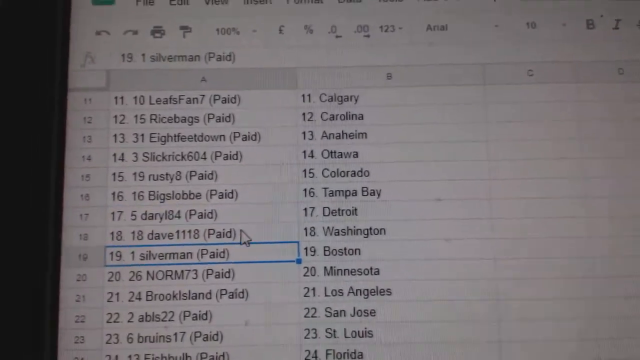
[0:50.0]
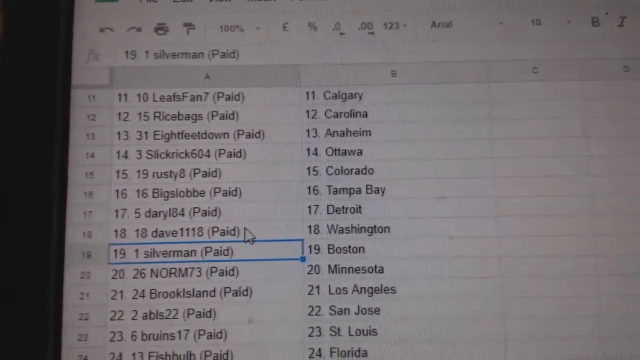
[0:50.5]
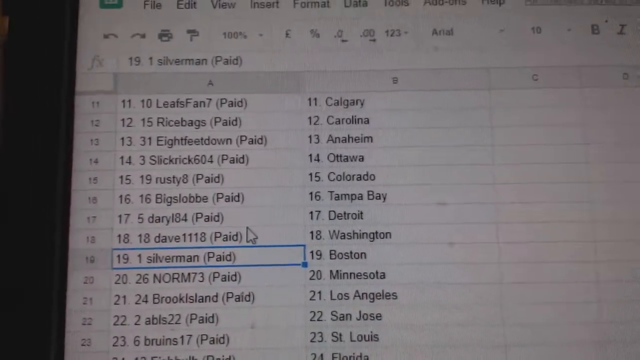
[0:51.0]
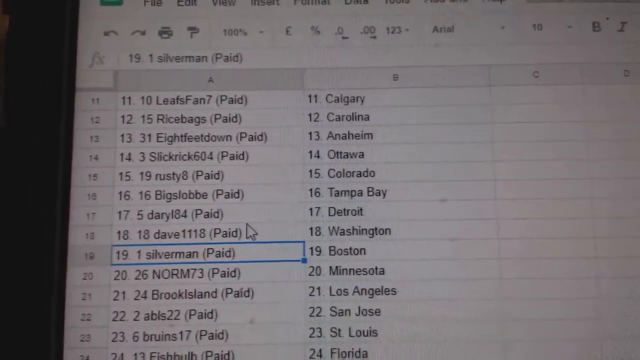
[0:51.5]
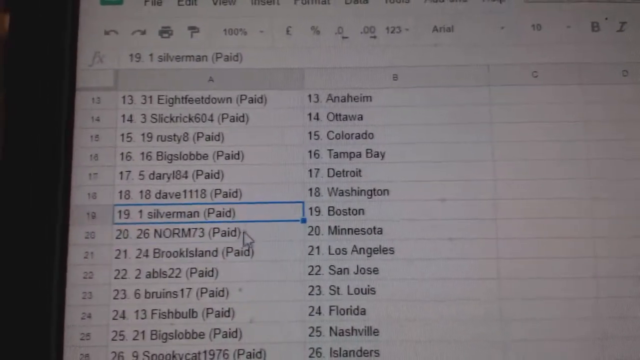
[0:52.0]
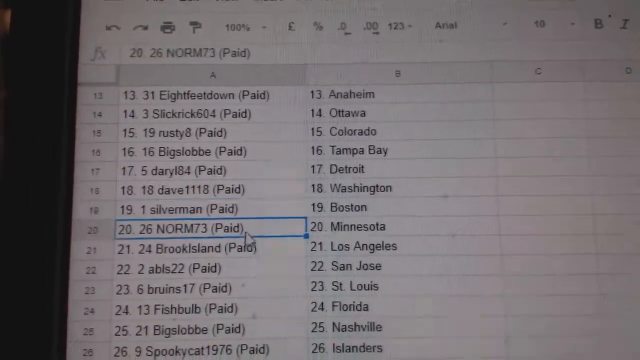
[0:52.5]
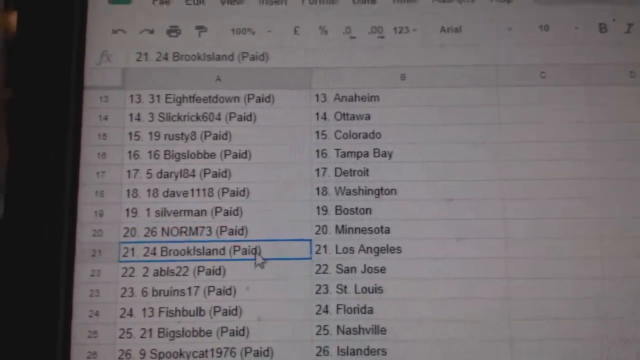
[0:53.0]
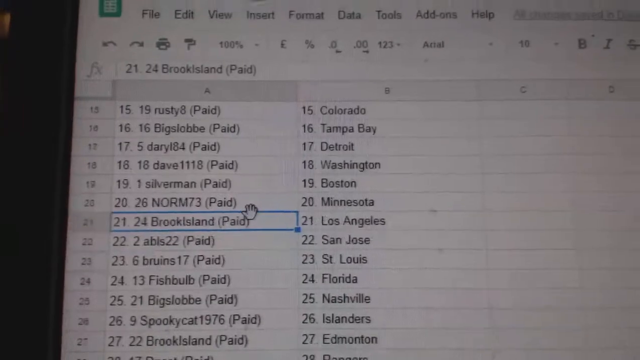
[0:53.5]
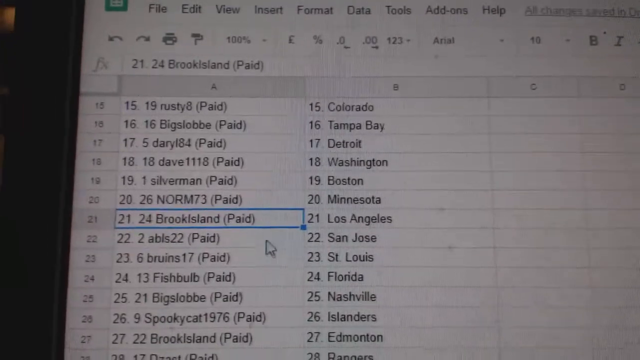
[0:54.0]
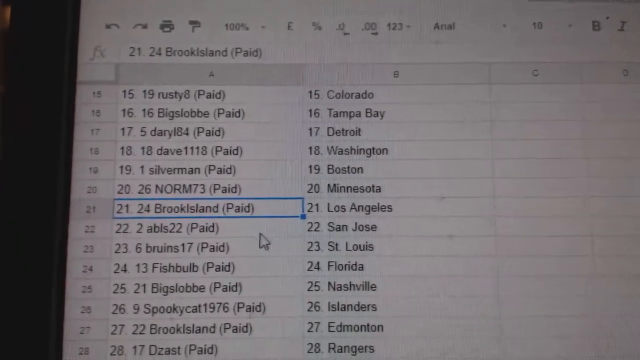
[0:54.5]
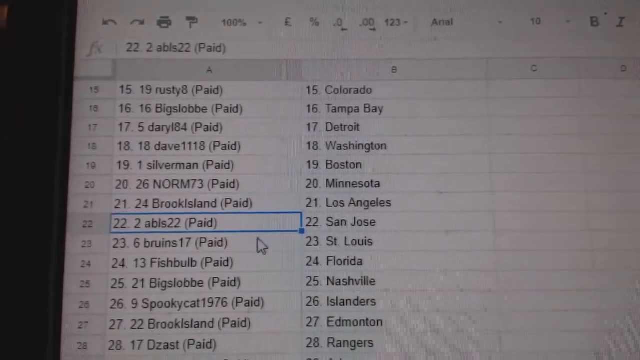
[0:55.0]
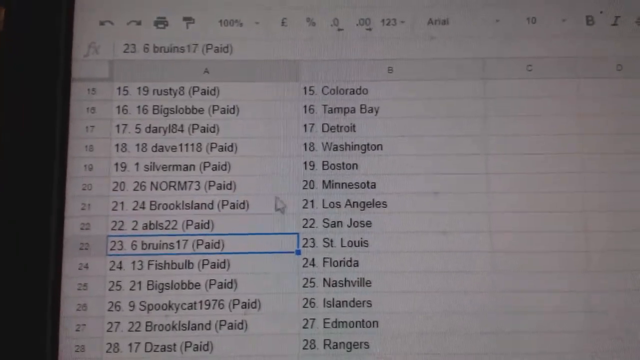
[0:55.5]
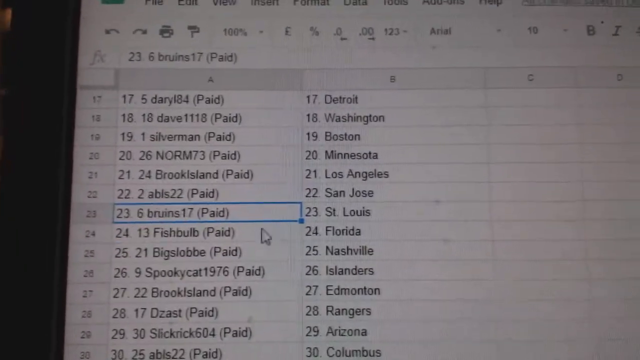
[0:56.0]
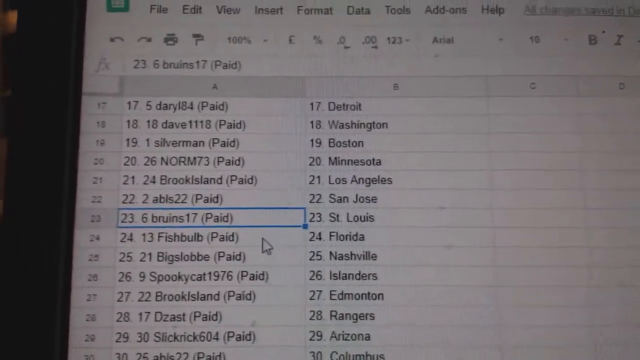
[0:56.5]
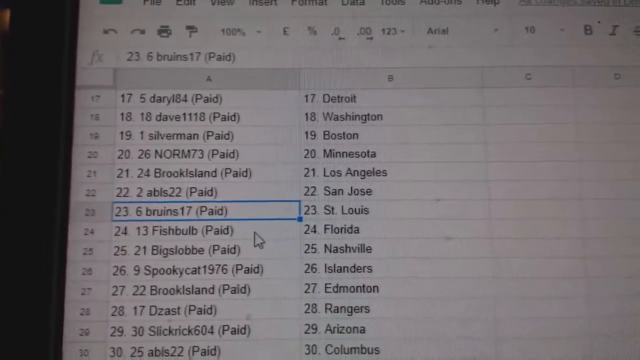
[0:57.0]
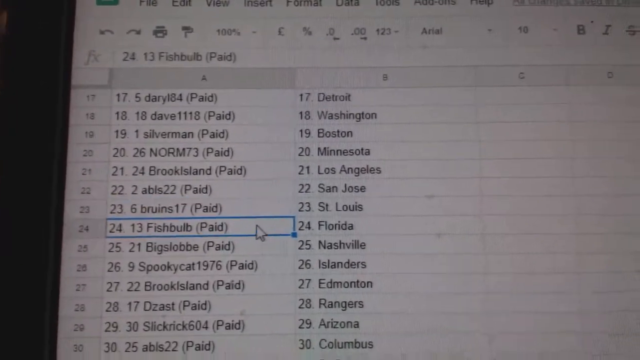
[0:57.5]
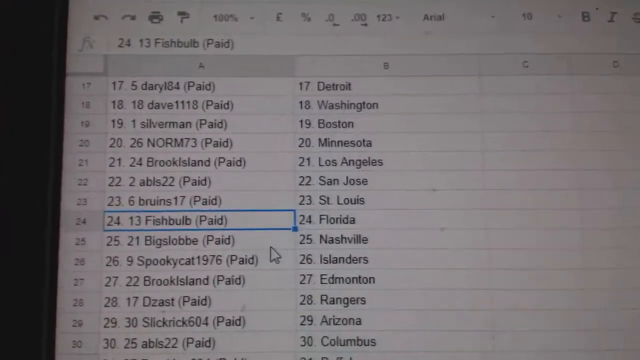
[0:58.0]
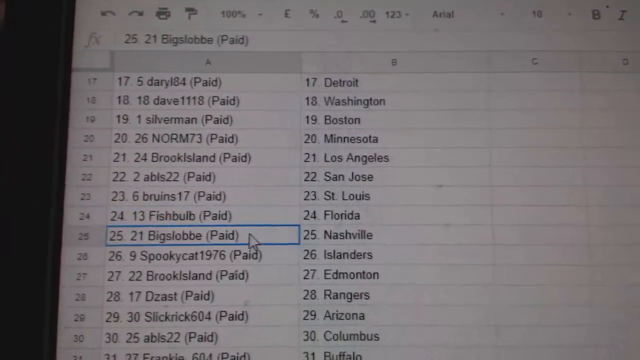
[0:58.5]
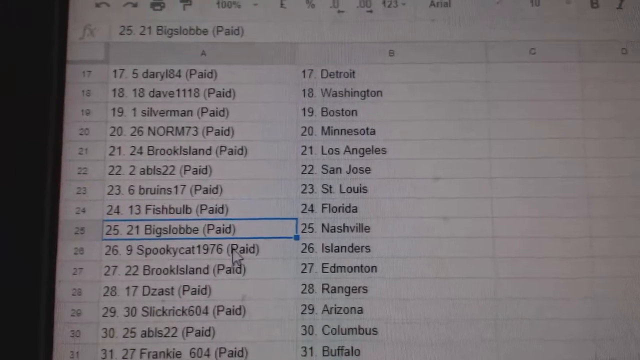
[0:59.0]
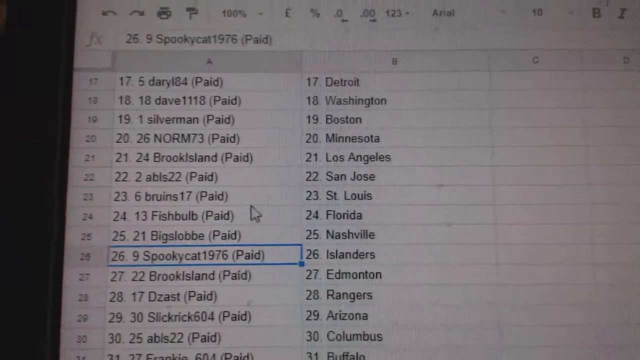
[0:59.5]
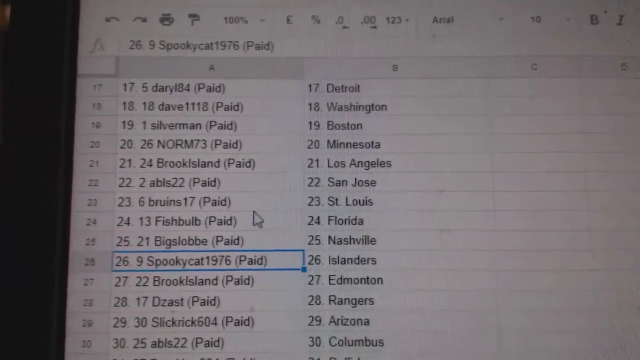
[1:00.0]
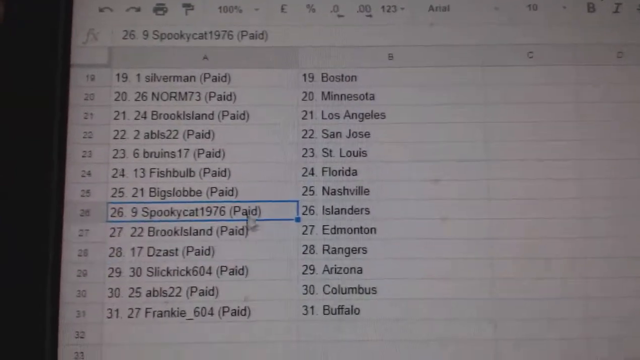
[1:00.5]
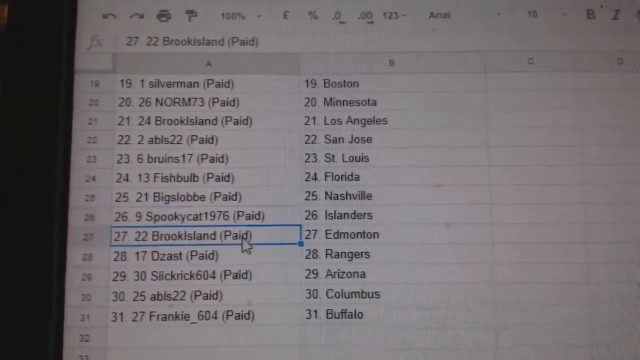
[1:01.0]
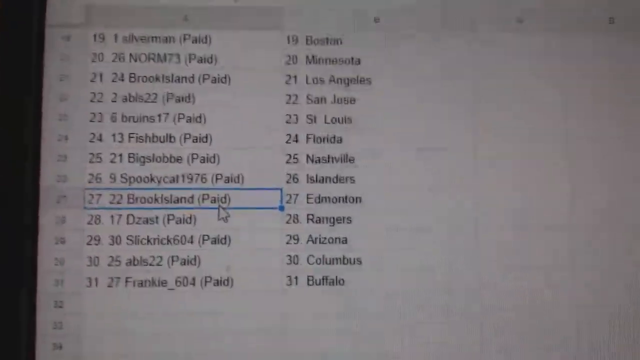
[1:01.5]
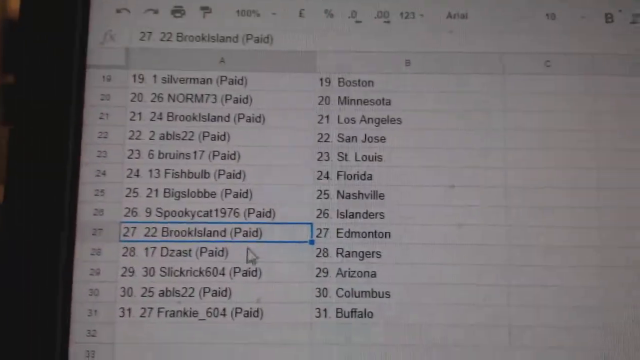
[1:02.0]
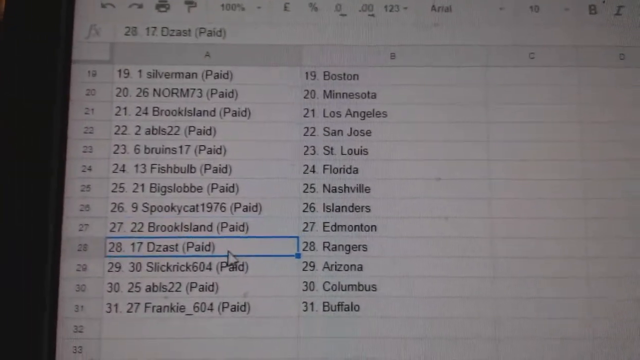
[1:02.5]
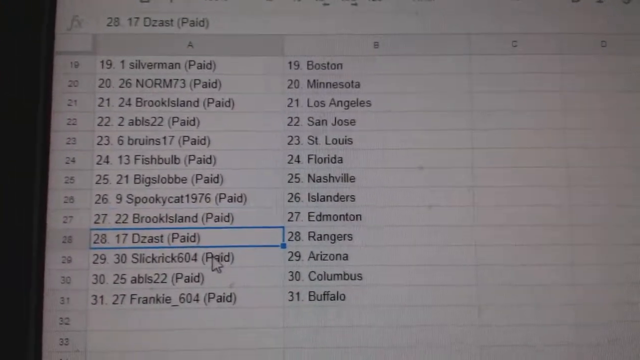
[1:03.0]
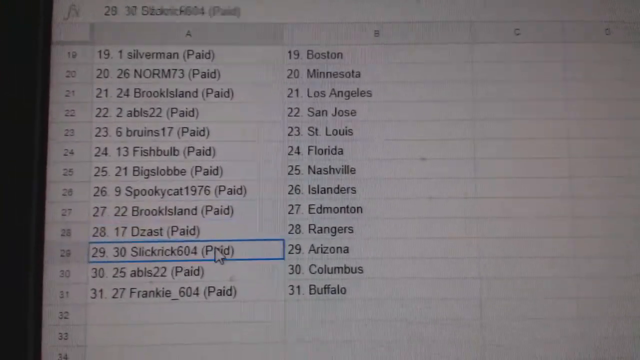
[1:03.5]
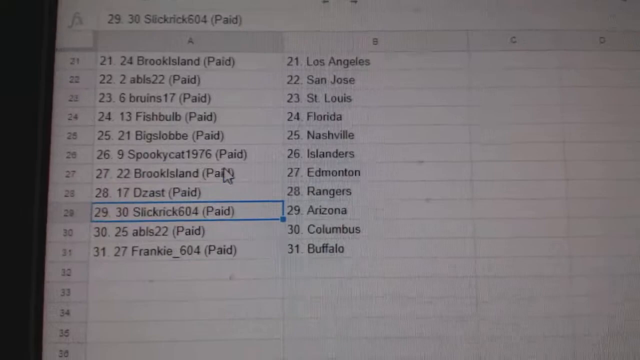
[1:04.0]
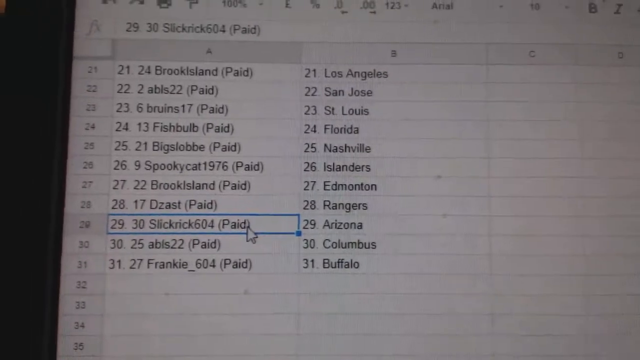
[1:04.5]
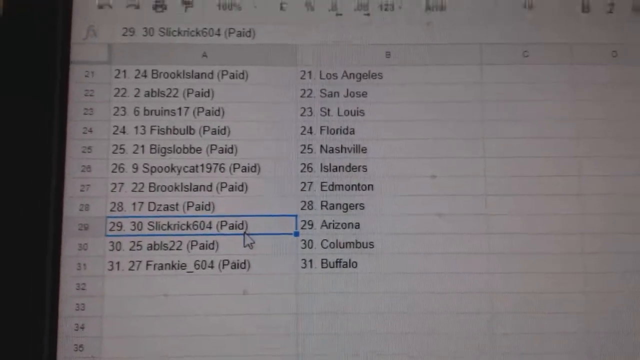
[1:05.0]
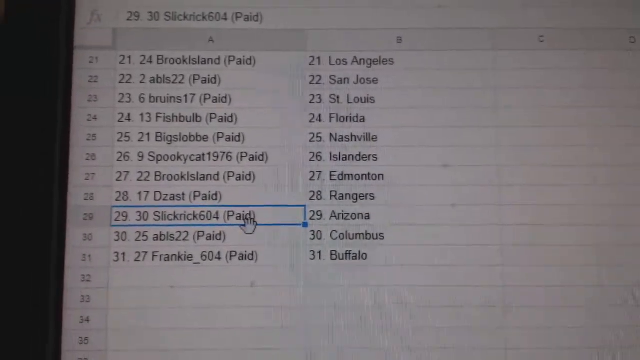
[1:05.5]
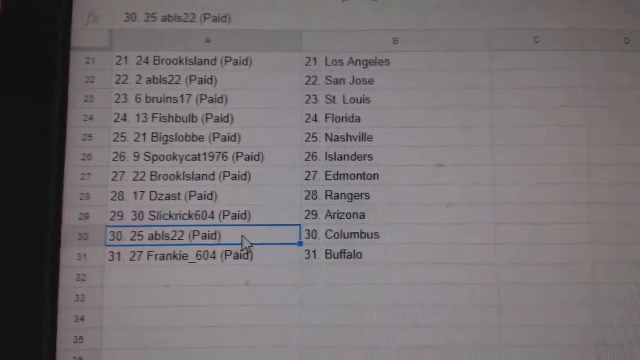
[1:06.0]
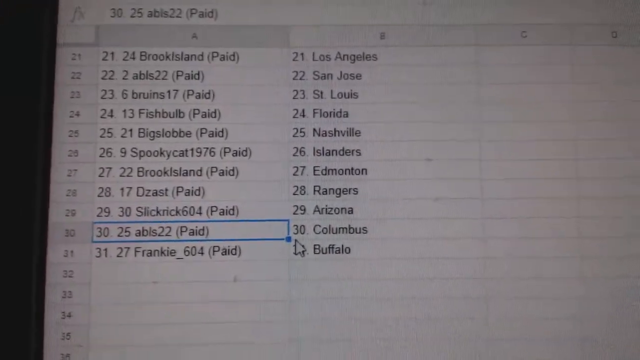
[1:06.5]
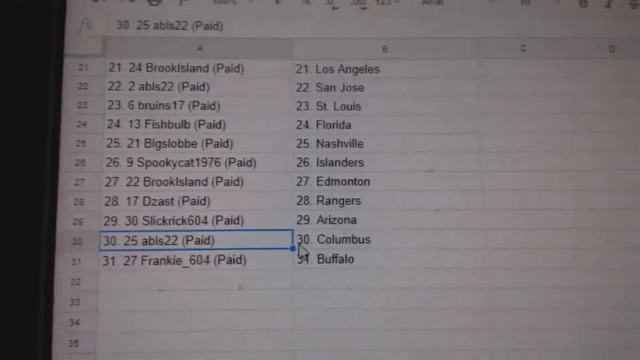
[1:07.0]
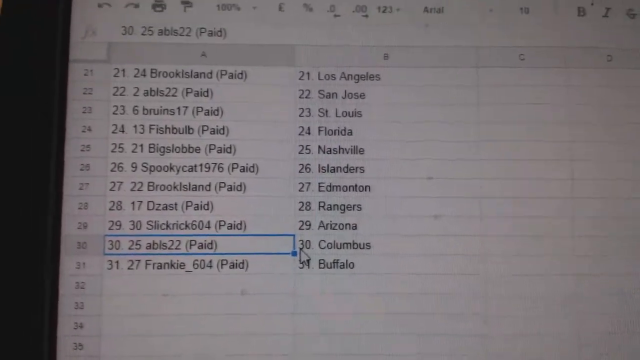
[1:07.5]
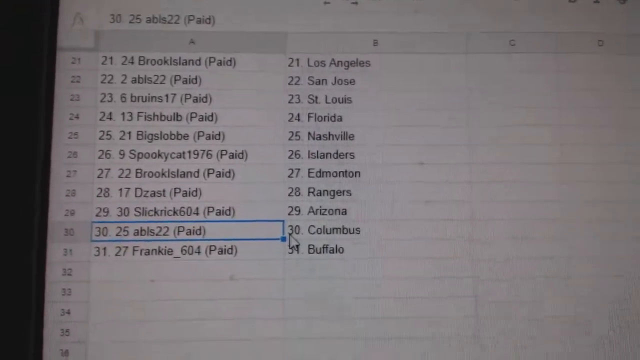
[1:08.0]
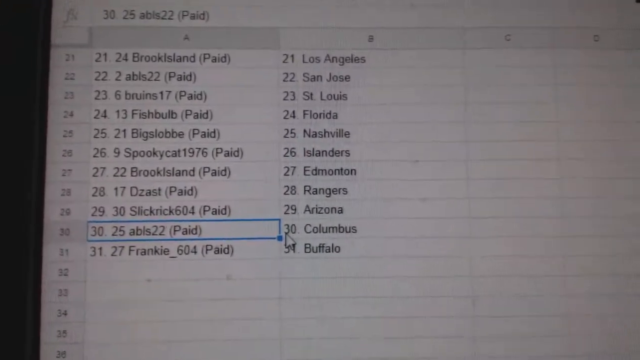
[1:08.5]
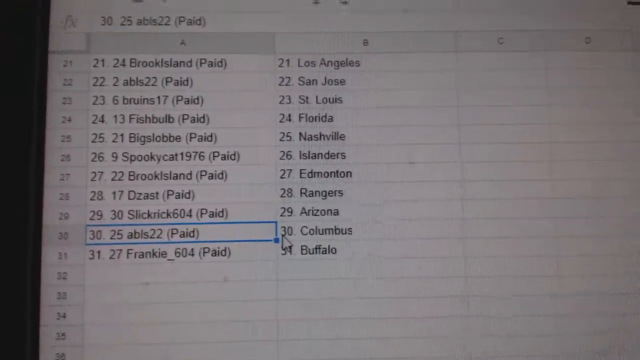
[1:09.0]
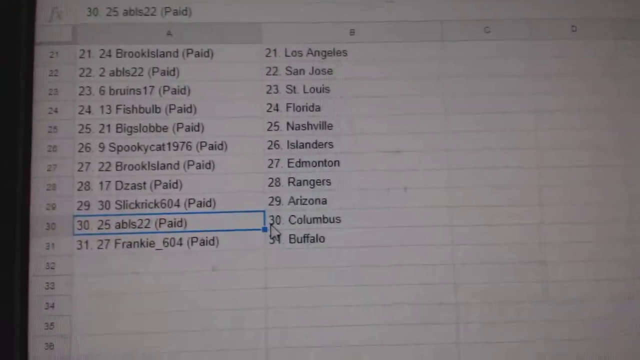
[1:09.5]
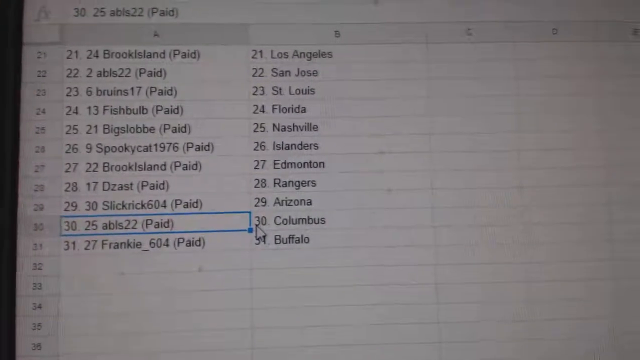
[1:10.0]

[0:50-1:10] A Google Sheet appears on screen with an A column and a B column, with rows numbered 11 through 23 visible. From row 11 downward, the A column reads "10 Leafs fan paid", "15 Rice Bag paid", "31 8 Feet Now paid", "3 Slick Rick 604 paid", "19 Rusty 8 paid", "16 Big Globes paid", "5 Daryl 8184 paid", "18 Dave 1118 paid", "1 Silverman paid", "26 Norm 73 paid", "24 Brooks Island paid", "2 Ablis 22 paid", "6 Bruins 17 paid". Number 19 is selected with a blue line around it and reads "1 Silverman paid". The white mouse cursor scrolls down and clicks the 20th, 21st, 22nd and 23rd entries, each getting a blue outline as it is clicked, then continues through the 24th, 25th, 26th, 27th, 28th and 29th cells under the A column. It scrolls down more and clicks the 30th cell. The video shakes while the 30th cell is selected; the 31st cell, the last one, is below it and is not selected.